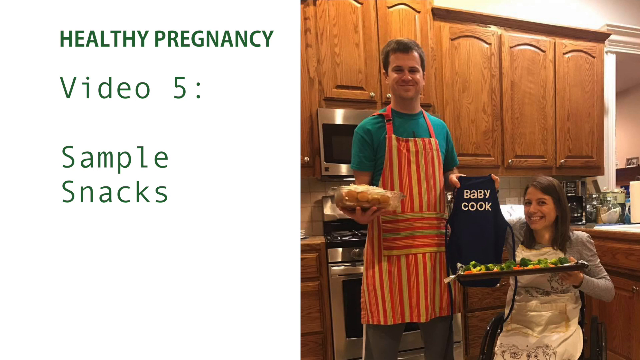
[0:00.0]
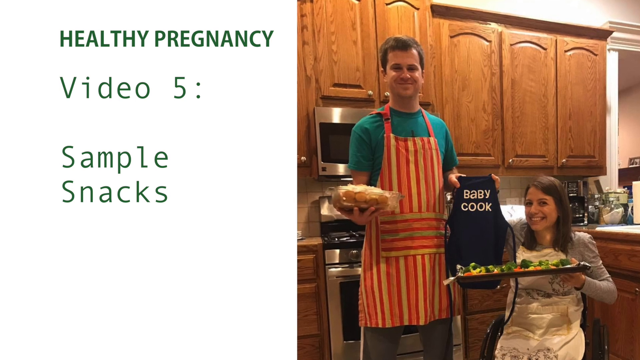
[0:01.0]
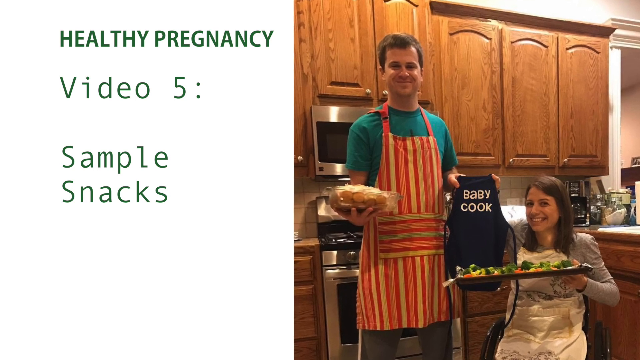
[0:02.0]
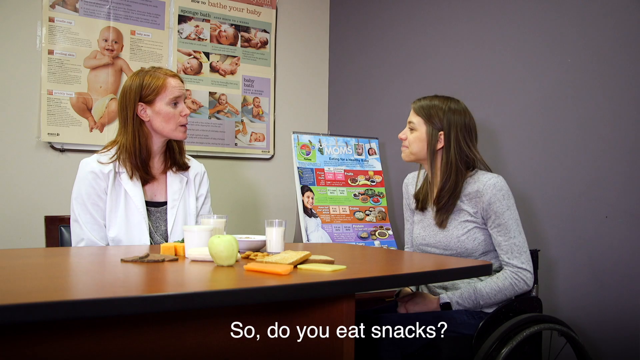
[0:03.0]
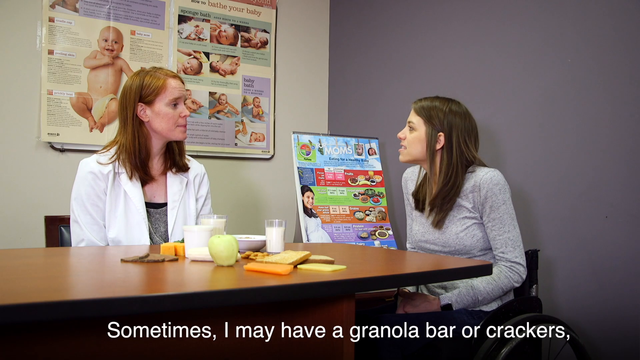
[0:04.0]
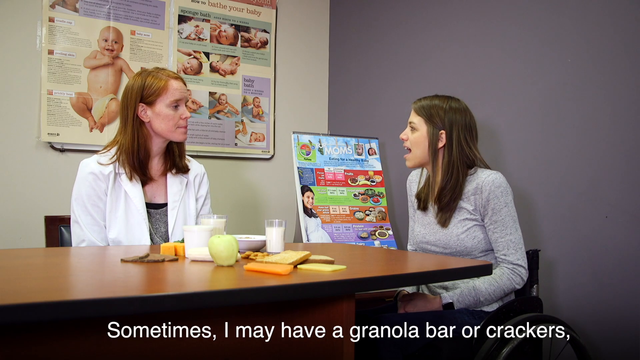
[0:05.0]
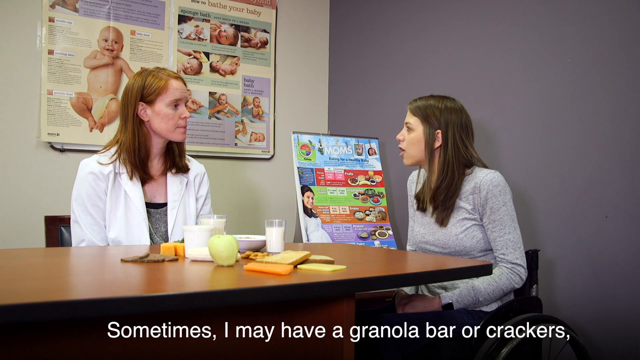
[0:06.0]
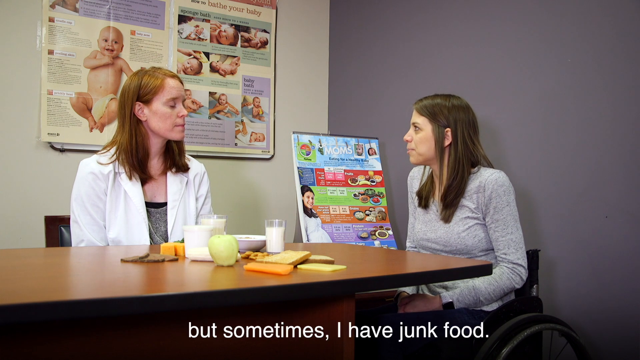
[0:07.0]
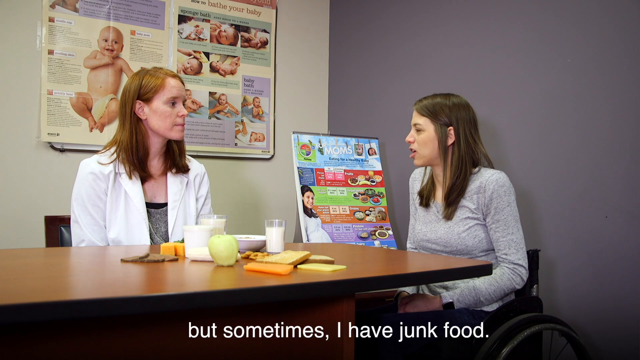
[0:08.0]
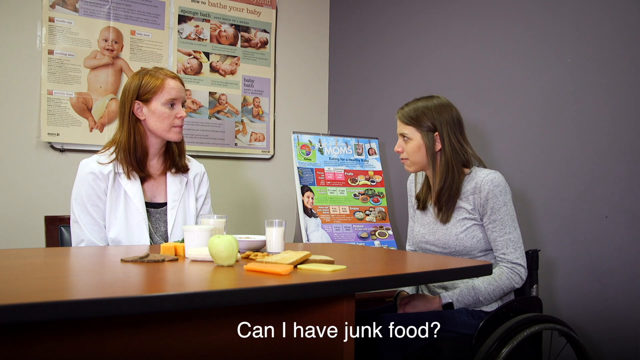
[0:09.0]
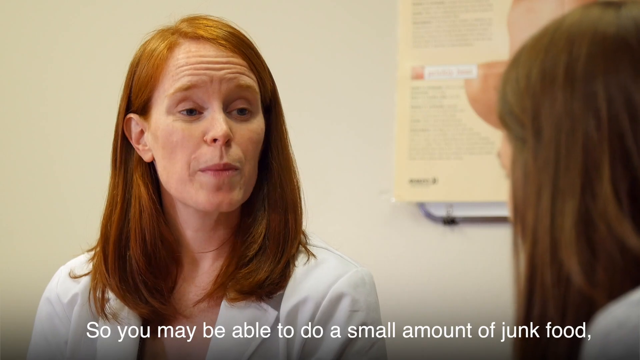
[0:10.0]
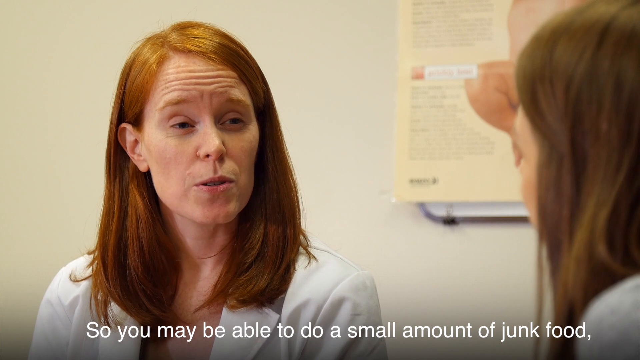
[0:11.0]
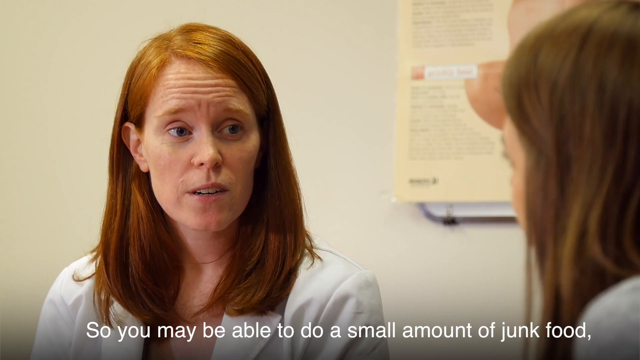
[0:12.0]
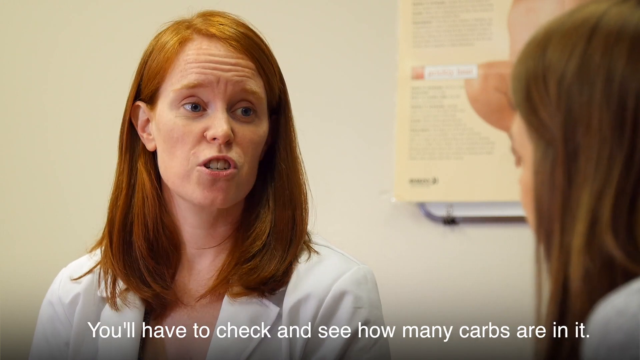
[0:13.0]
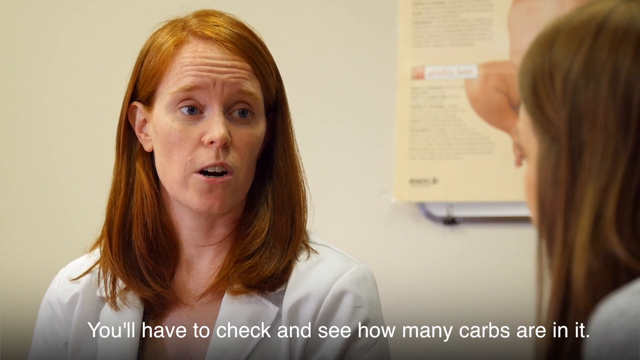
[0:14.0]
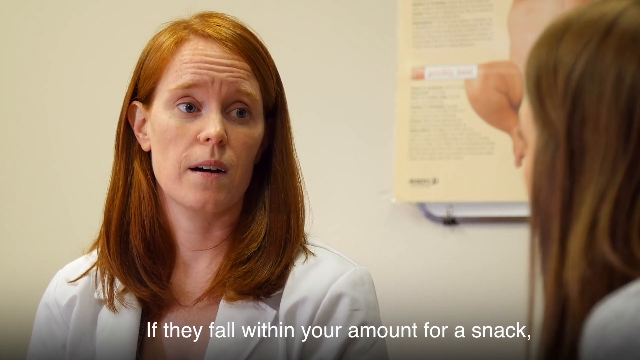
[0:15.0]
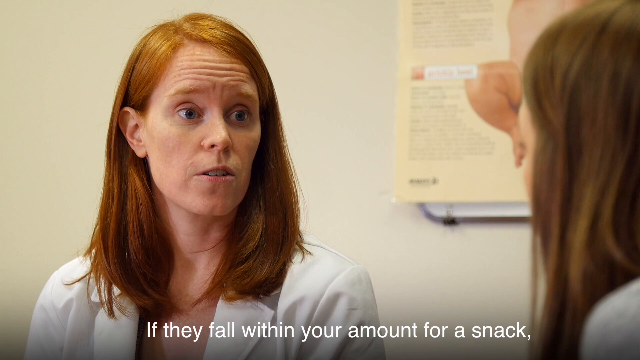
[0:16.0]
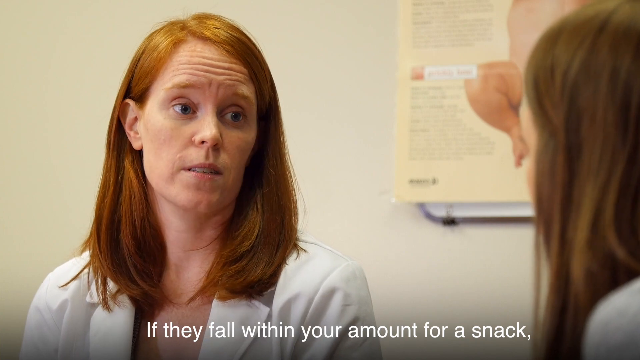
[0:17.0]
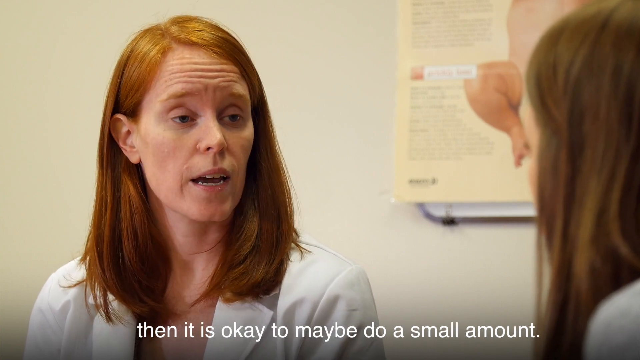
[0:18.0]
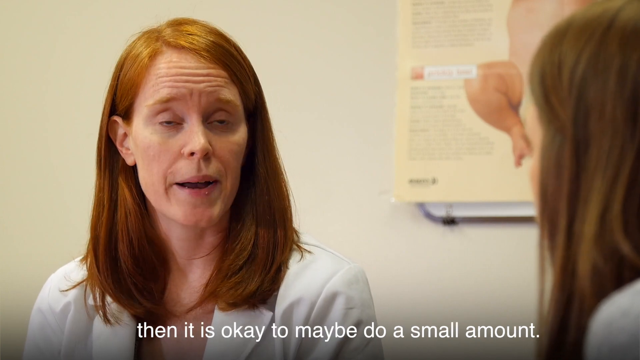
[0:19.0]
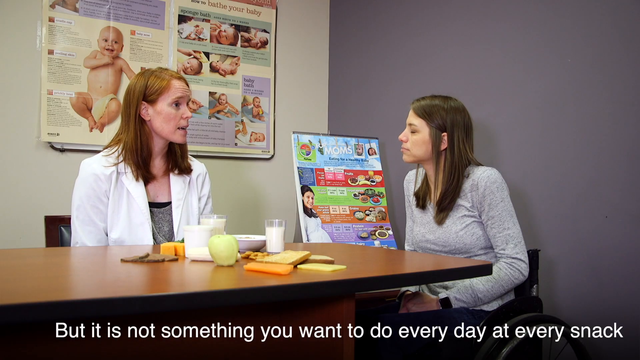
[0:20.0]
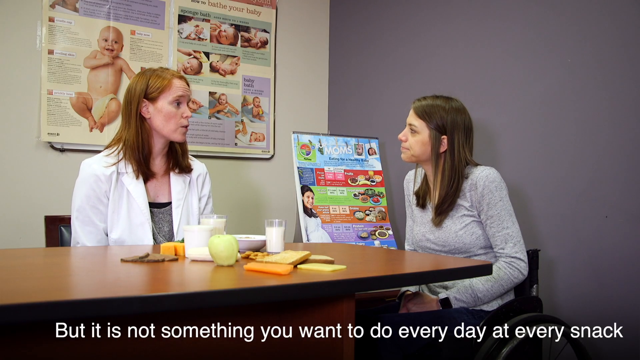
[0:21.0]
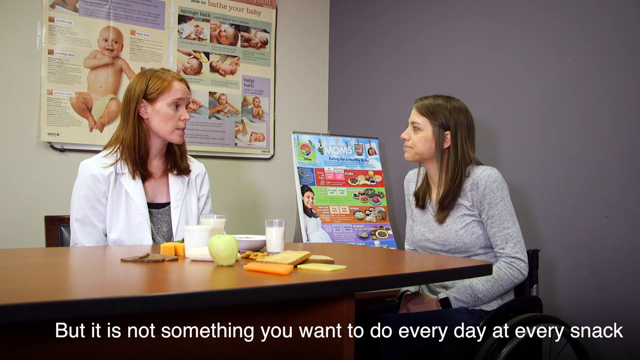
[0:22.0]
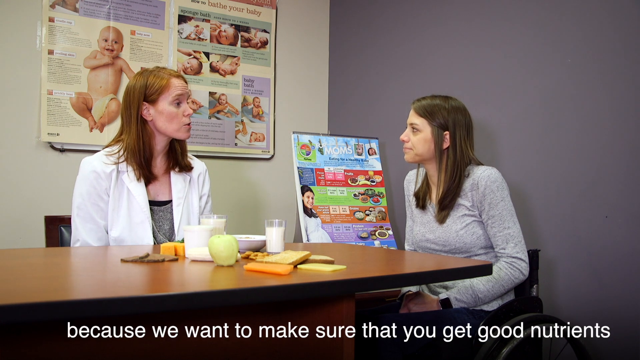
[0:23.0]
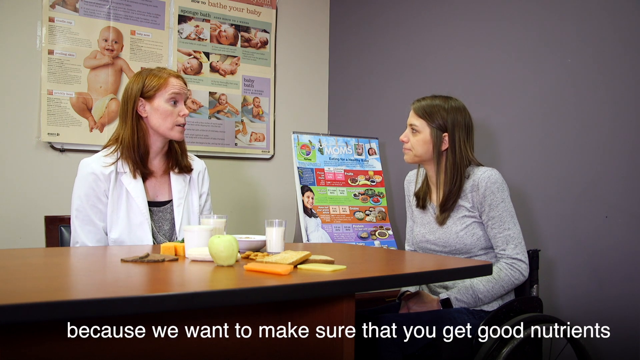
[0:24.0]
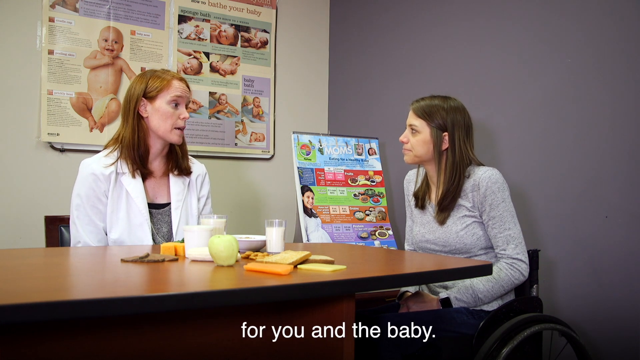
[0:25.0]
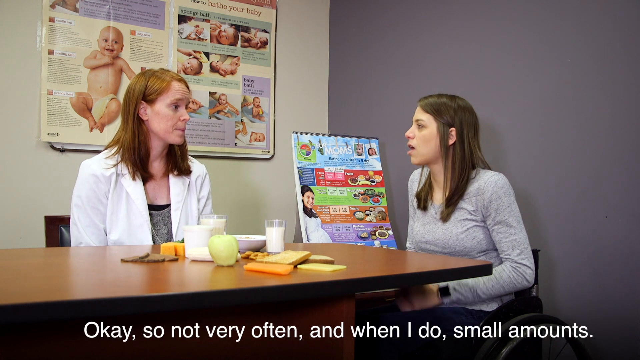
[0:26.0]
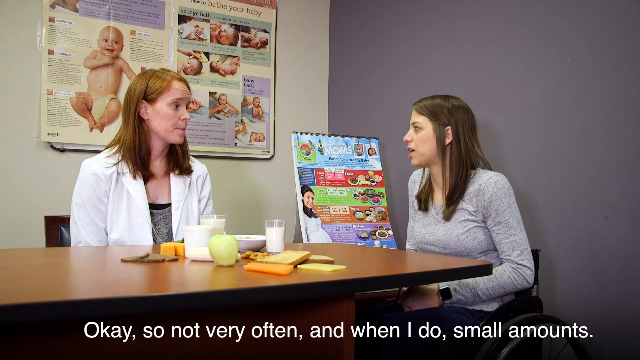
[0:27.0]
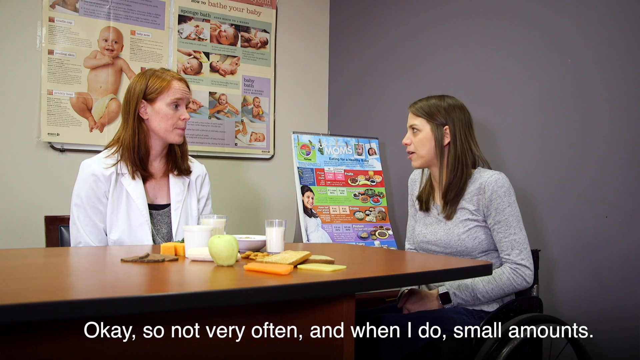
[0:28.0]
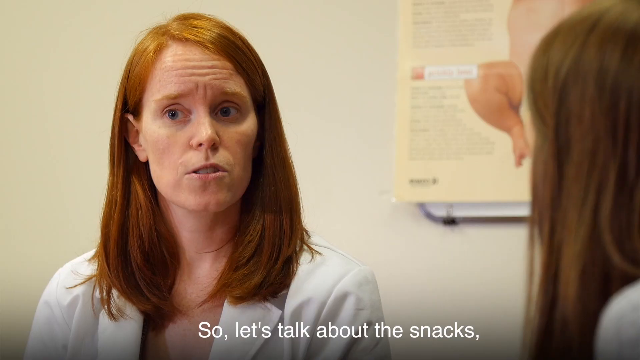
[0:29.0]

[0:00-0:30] The video appears to give some nutritional notes. On the left, text reads "healthy pregnancy, video 5, sample snacks." On the right, two people look like they are in a kitchen: a man wearing a striped apron, and a woman who is either sitting or crouched down, holding a veggie tray. The man is also holding a small apron that says "baby cook" on it. The video then shows an image of a woman who appears to be the same woman as before, sitting at a table and apparently speaking to a doctor or possibly a nutritionist. The two have a back and forth, and the doctor seems to be asking about her eating habits. The woman says she sometimes has a granola bar or crackers but sometimes junk food, and asks whether she can have junk food; the doctor says a small amount may be okay if it fits the carbs for a snack, but not every day at every snack.